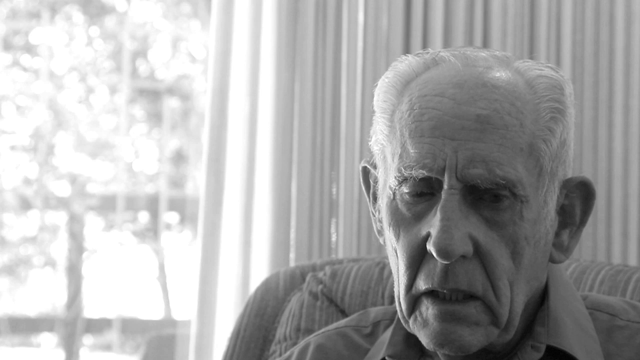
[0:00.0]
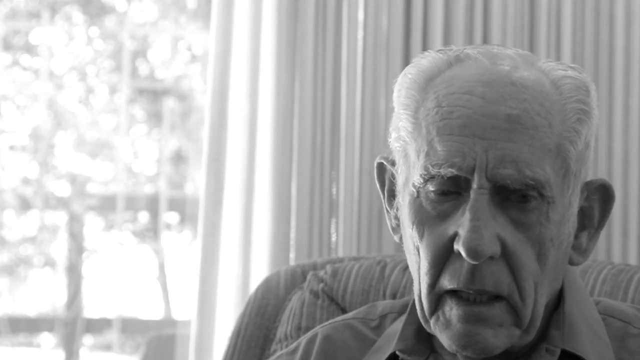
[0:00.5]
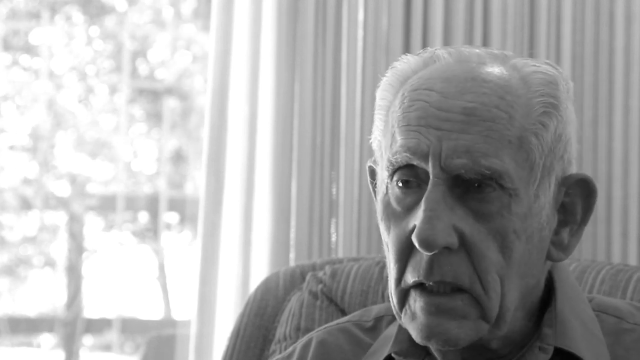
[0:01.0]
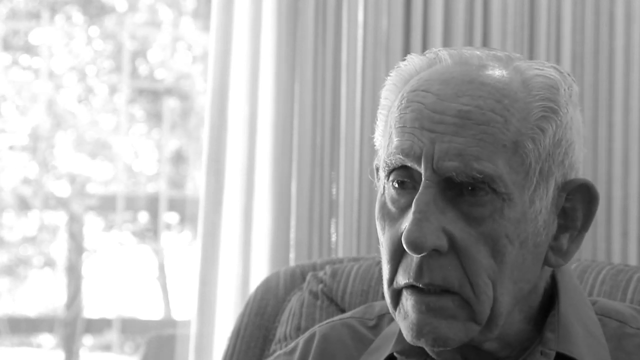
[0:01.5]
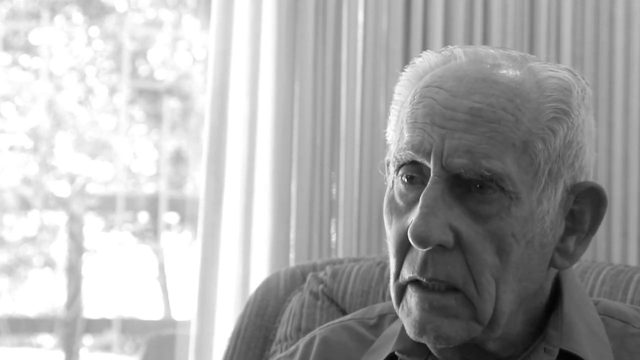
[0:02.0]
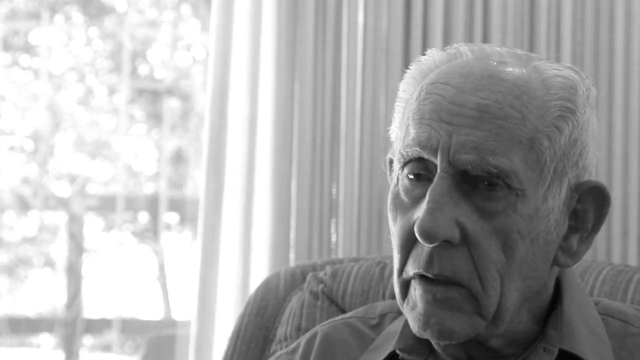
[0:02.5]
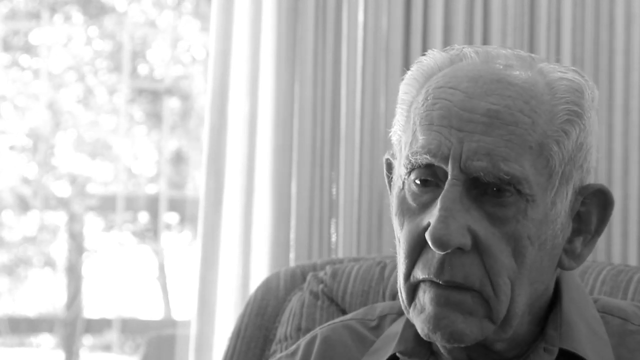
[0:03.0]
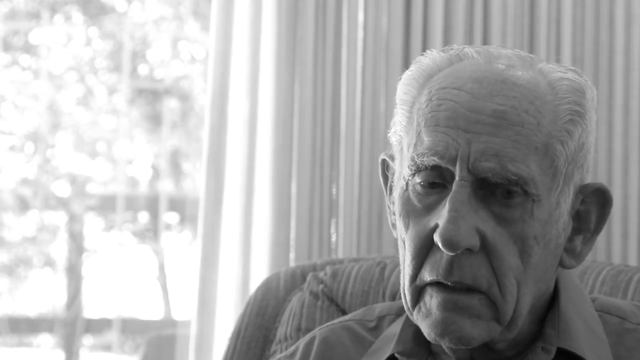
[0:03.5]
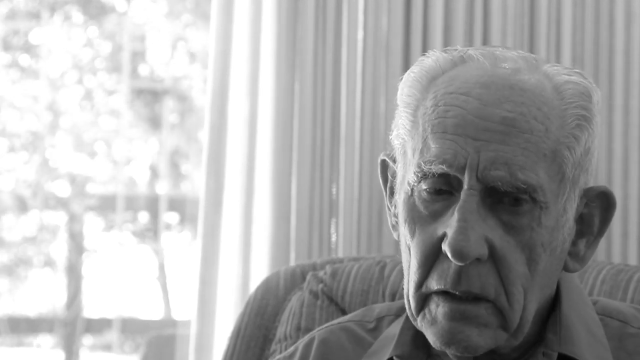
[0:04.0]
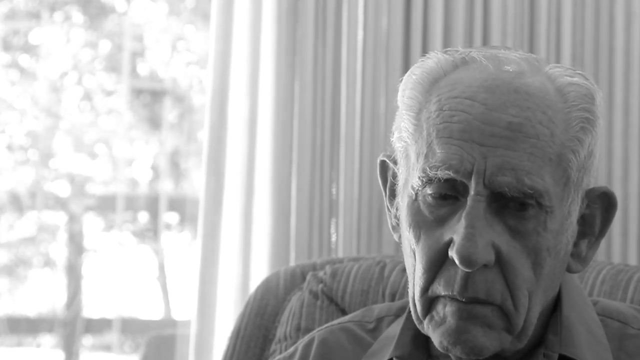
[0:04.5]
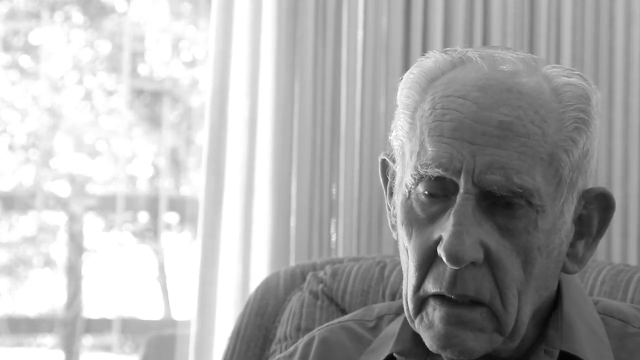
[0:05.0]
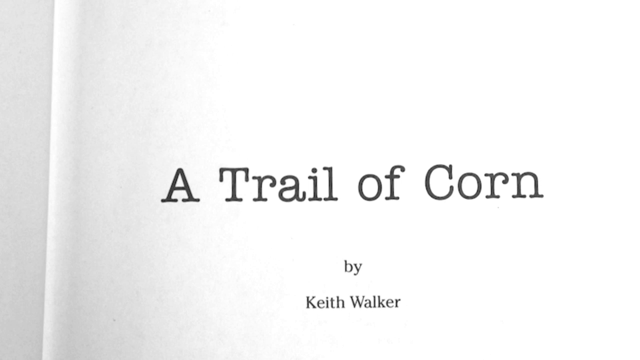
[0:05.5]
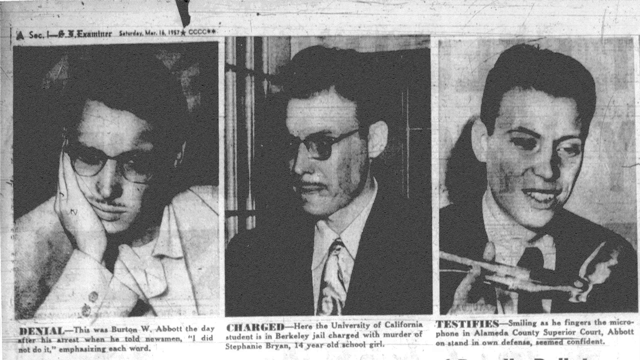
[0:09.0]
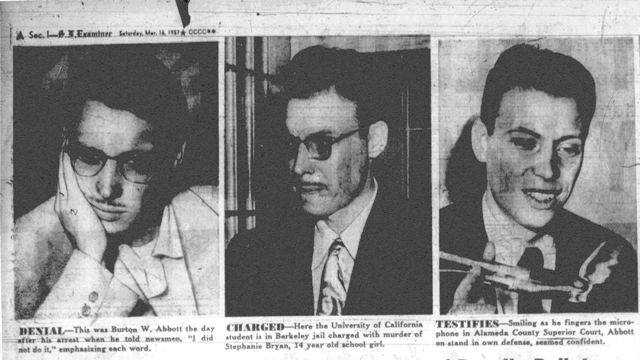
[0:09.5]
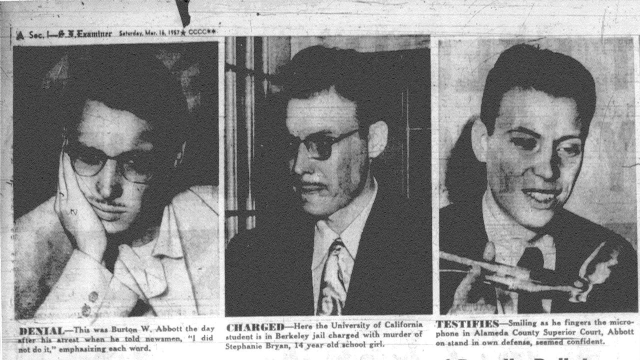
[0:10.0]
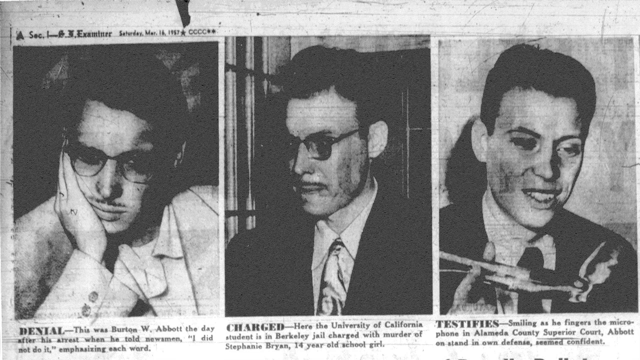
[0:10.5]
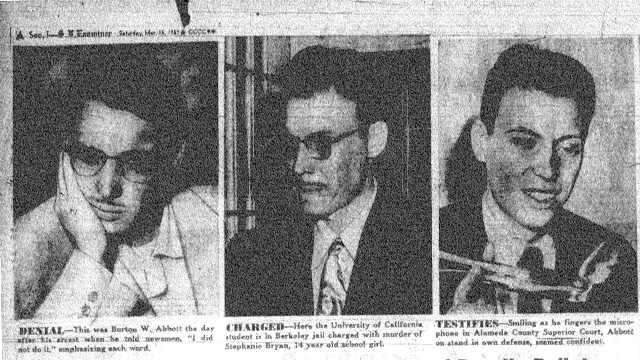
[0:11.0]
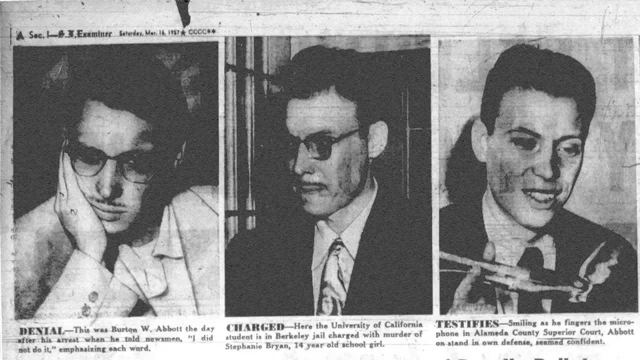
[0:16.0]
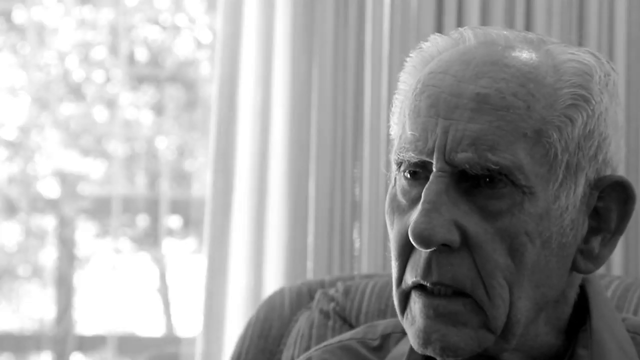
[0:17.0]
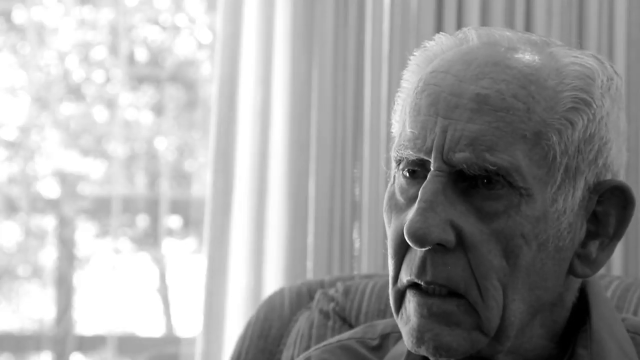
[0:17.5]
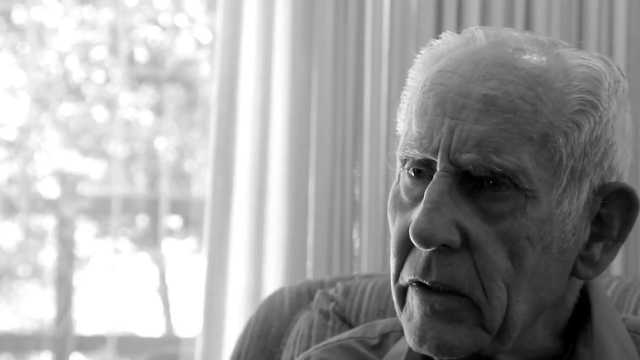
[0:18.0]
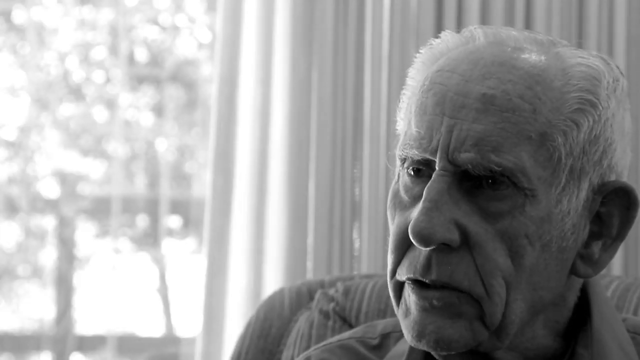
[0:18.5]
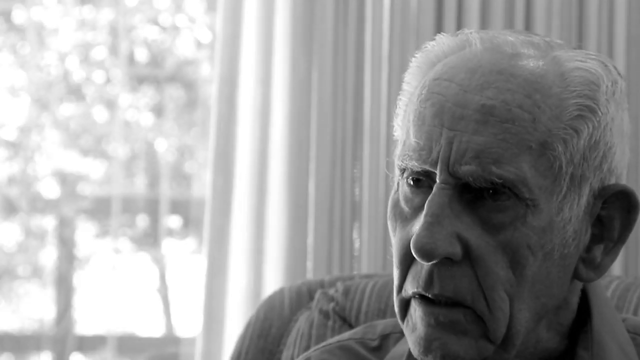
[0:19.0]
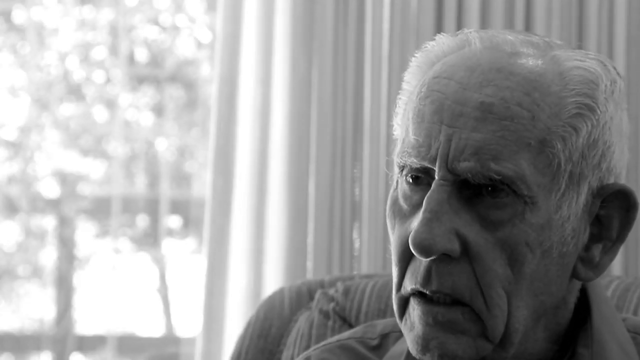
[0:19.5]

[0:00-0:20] A man is sat in an armchair in a sunny room with curtains behind him, having a conversation. He is probably in his 80s, with thinning hair and a craggy face; he is clean-shaven and white. He is shown talking, and the title of the video is A Trail of Corn by Keith Walker. A series of photos follows from a newspaper called The Examiner, a Saturday edition in March, apparently from 1957. Three men appear with captions underneath them, though all three photos are actually different photos of one person, Burton W. Abbott. The first shows a man probably in his 20s with a thin pencil moustache, dark hair and glasses; the text underneath reads "denial. This was Burton W. Abbott the day after his arrest when he told newsmen, I did not do it, emphasising each word." On the right-hand side is a probably slightly younger dark-haired man who is clean-shaven and wearing a shirt, tie and jacket, with the caption "testifies, smiling as he fingers the microphone in Alameda Country Superior Court. Abbott, on the stand in his own defence, seemed confident." The third photo is about him being charged; it states that he is a student at the University of California, and he has apparently been charged with murder. The video then goes back to the old man talking.